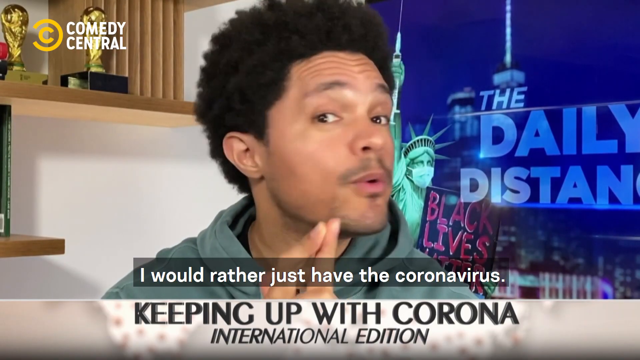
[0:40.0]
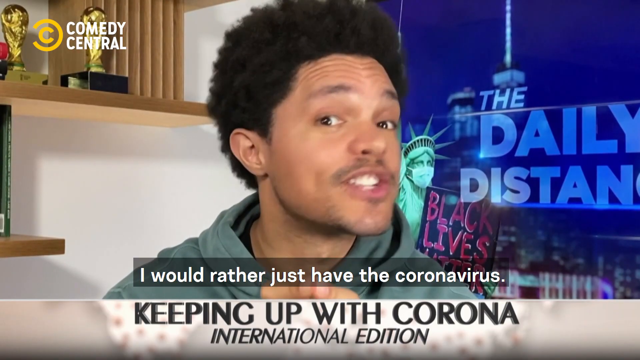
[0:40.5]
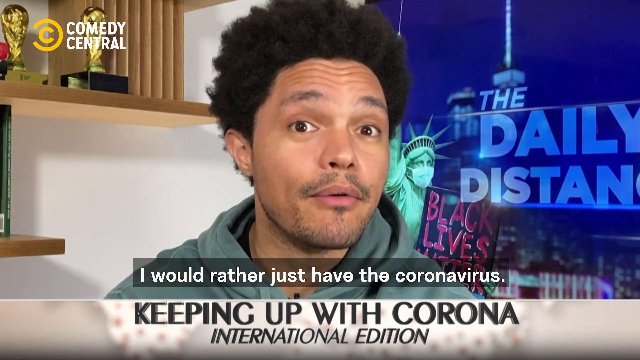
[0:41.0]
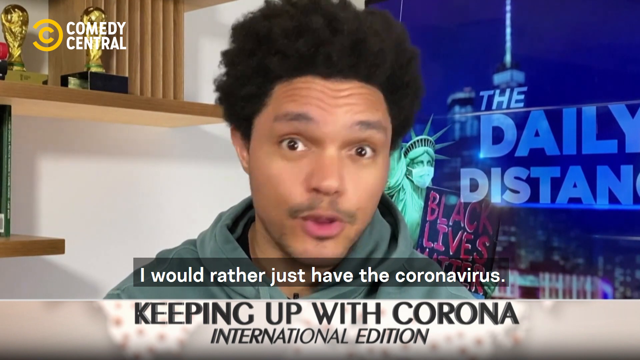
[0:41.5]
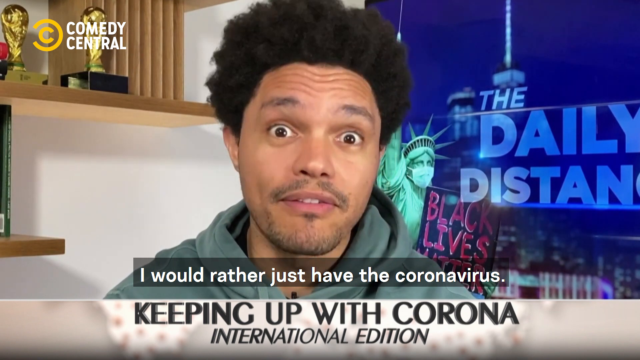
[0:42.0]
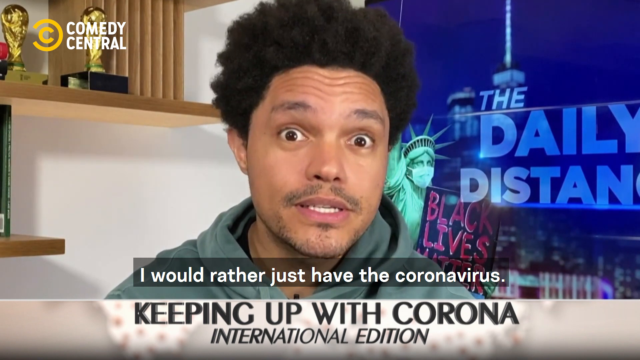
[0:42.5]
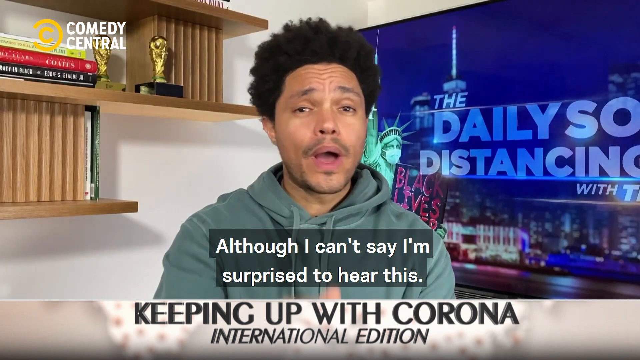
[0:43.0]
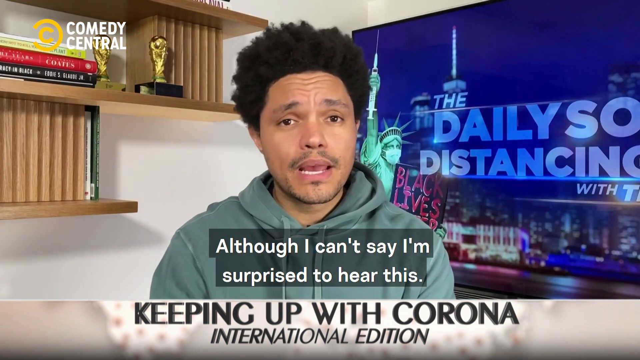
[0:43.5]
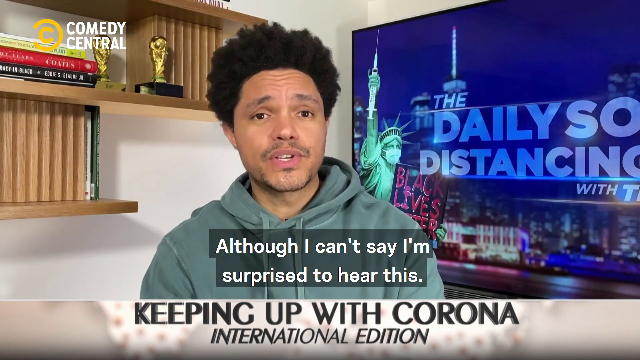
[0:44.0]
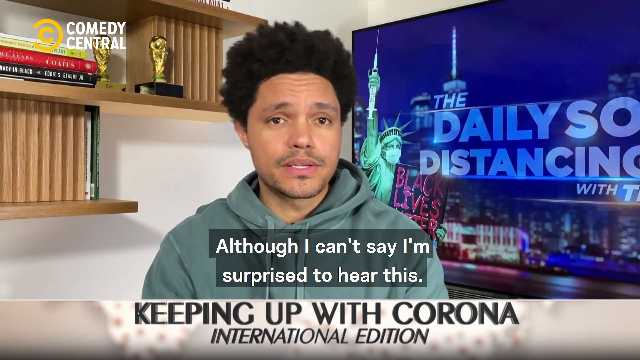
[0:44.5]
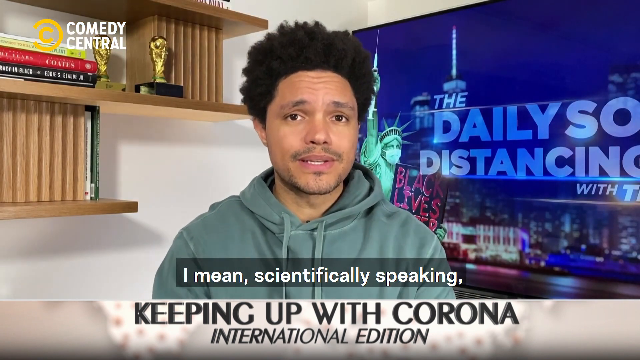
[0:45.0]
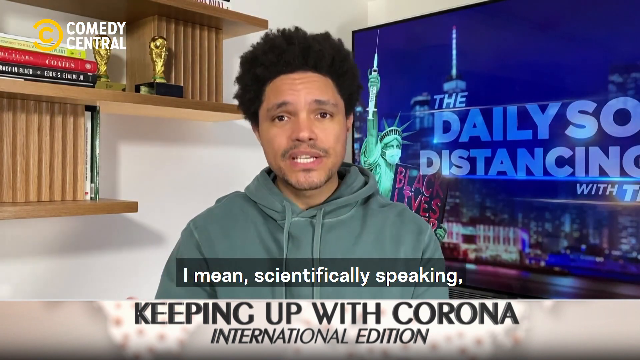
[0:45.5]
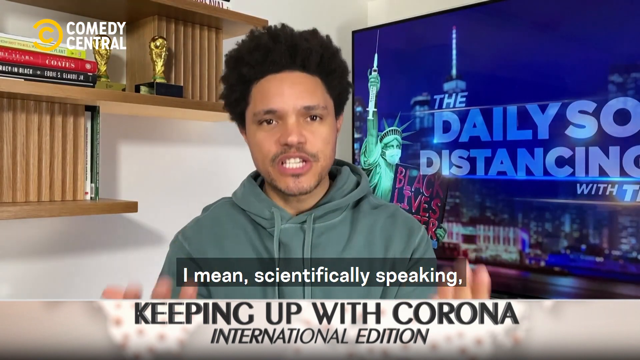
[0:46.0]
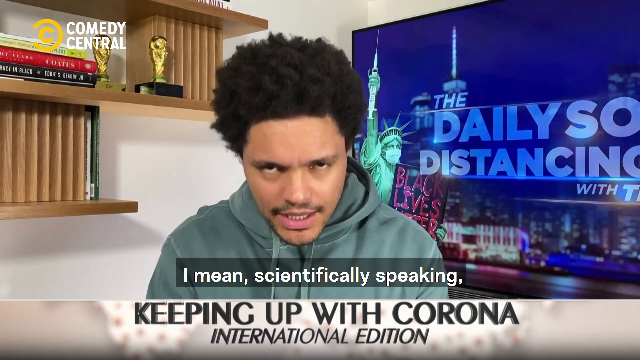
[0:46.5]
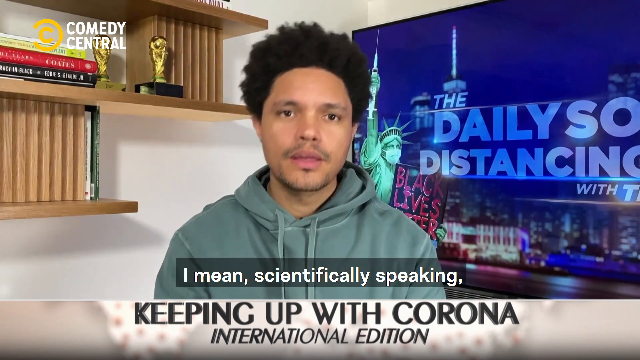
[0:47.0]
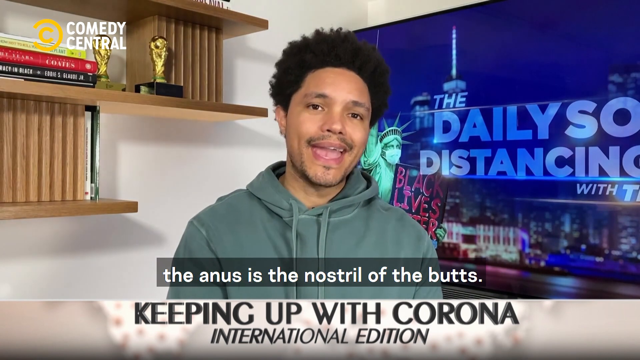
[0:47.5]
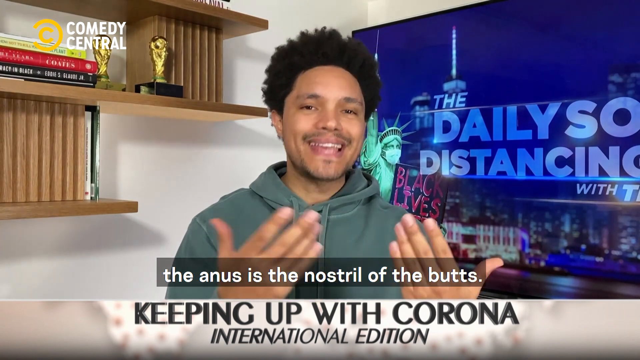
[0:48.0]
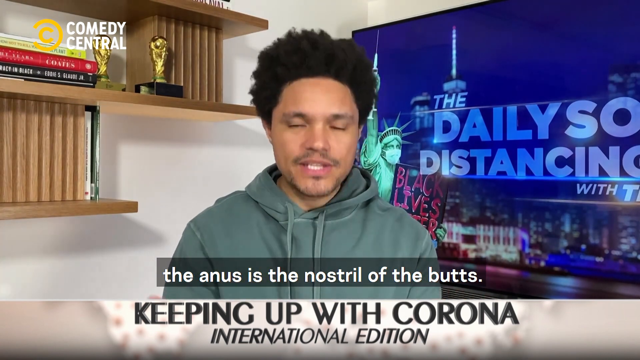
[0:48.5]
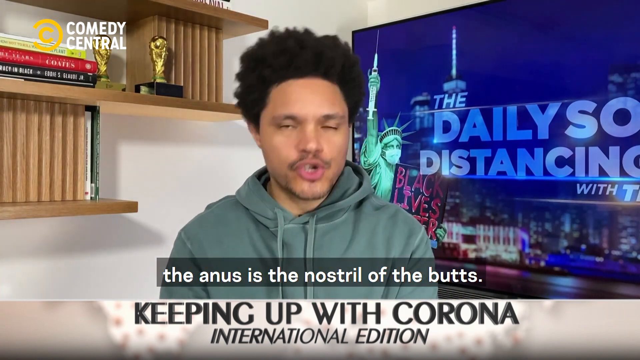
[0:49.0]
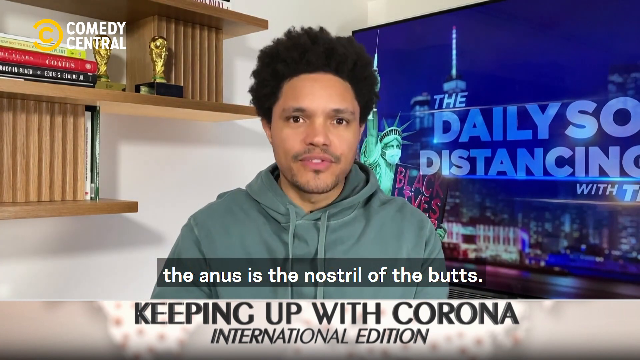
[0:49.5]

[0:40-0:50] Another anchor appears, seemingly on Comedy Central, with text reading "The Daily" and "distancing with Trevor Noah." At the bottom, text reads "keeping up with corona." Captions show what he says: "You know what? There's a point at which I would rather just have the coronavirus. Although I can't say I'm surprised to hear this, I mean, scientifically speaking, the anus is the nostril of the butts." The screen with the show's name also shows the Statue of Liberty wearing a face mask with a Black Lives Matter sign.